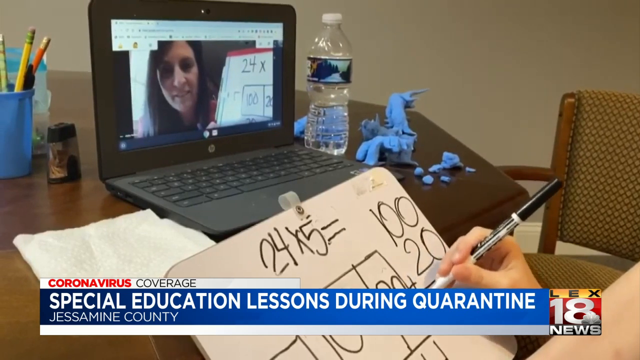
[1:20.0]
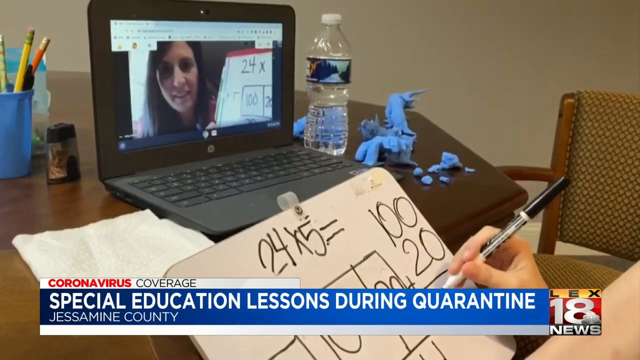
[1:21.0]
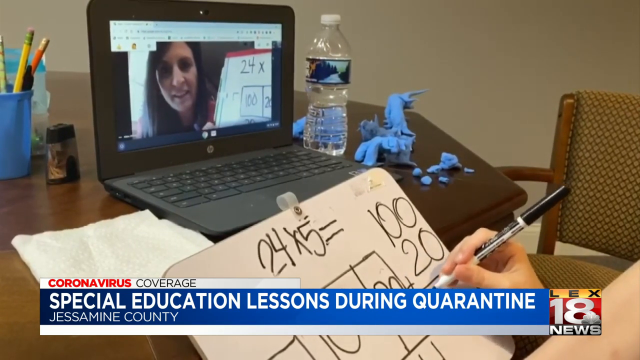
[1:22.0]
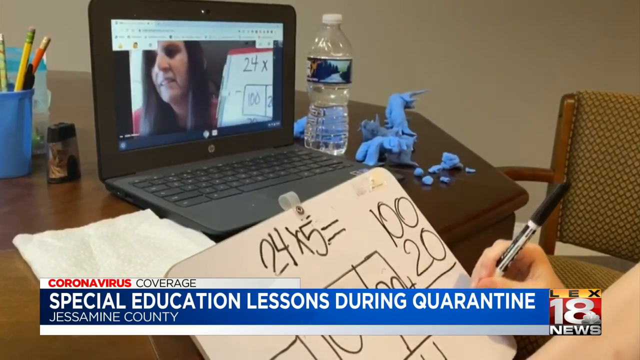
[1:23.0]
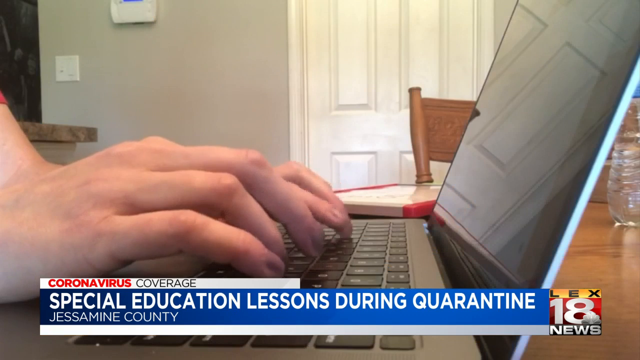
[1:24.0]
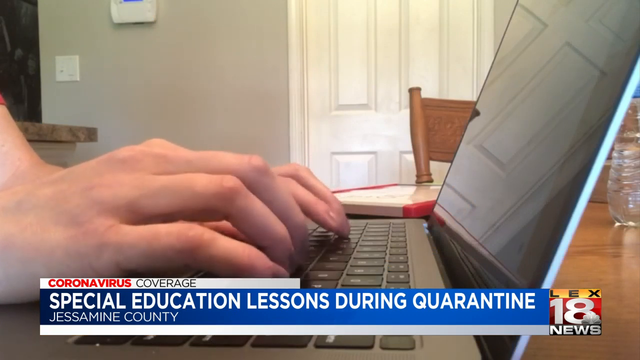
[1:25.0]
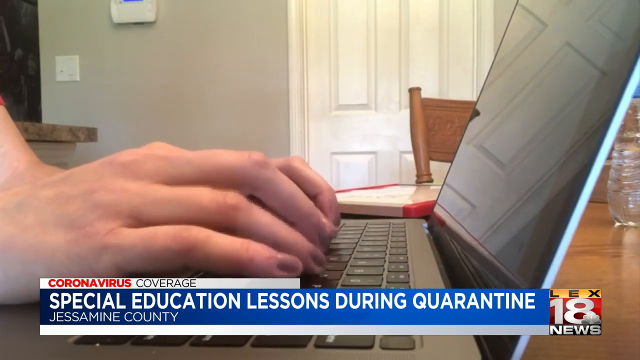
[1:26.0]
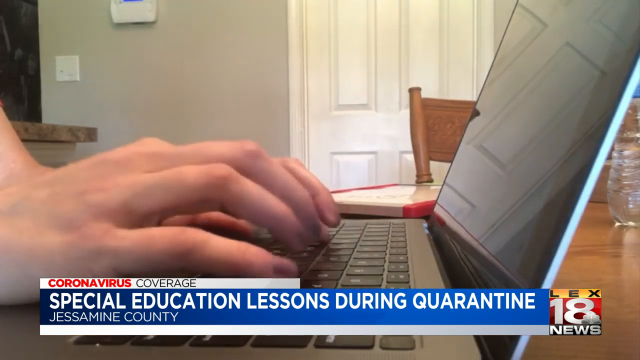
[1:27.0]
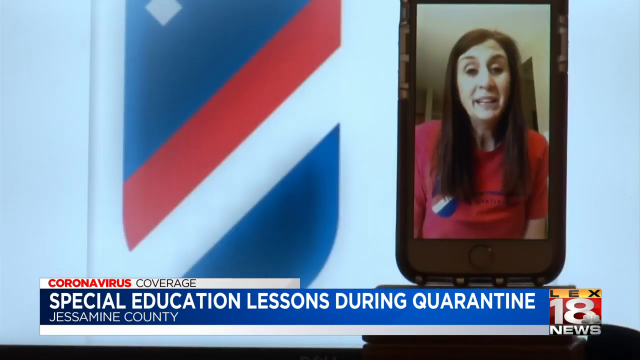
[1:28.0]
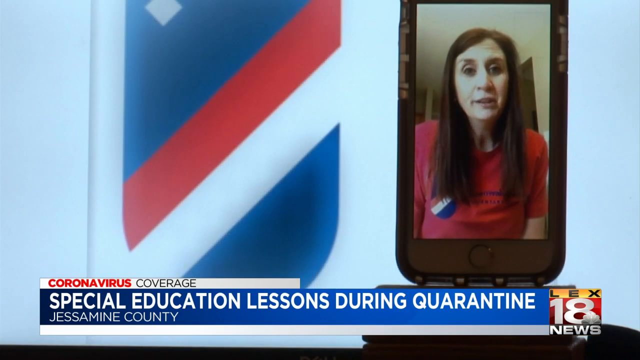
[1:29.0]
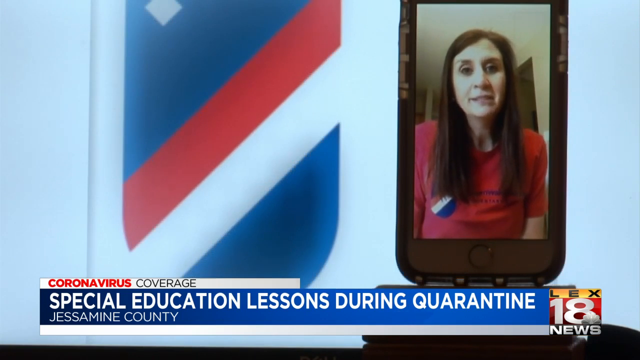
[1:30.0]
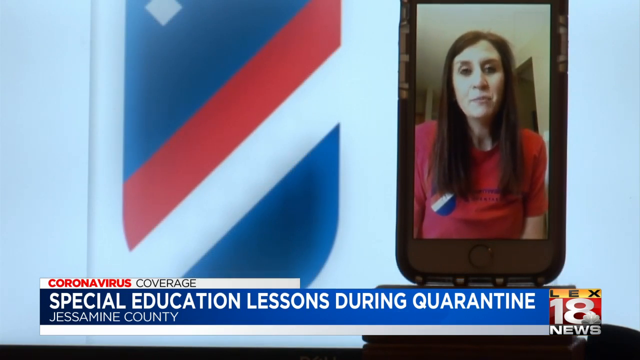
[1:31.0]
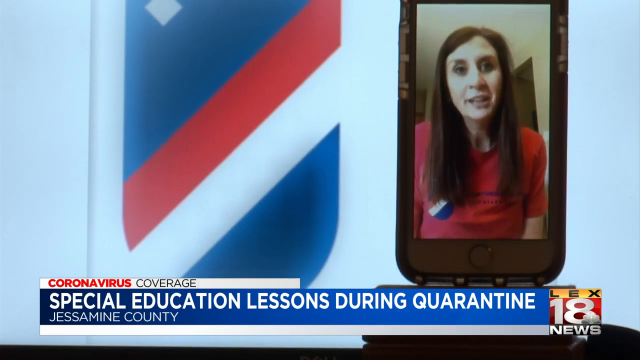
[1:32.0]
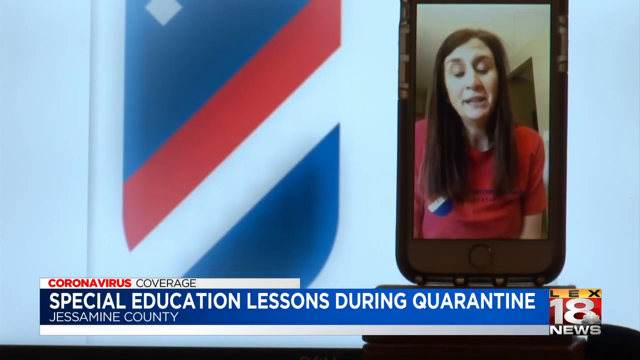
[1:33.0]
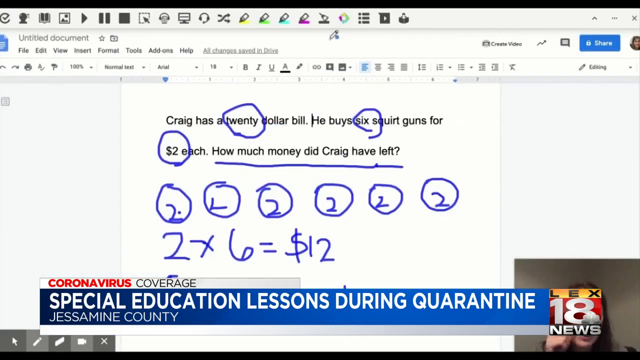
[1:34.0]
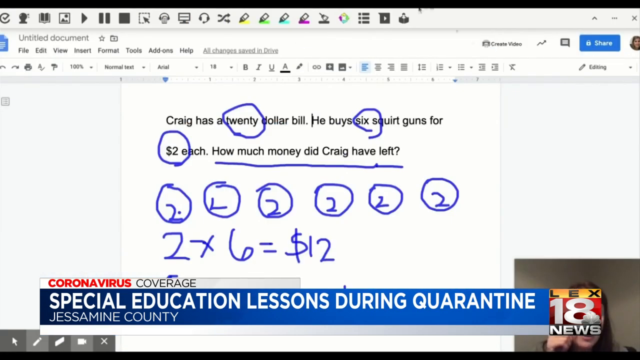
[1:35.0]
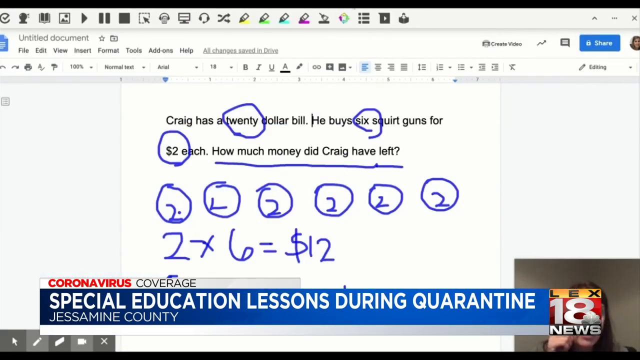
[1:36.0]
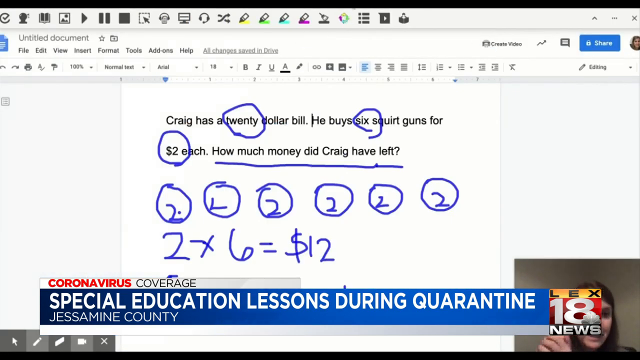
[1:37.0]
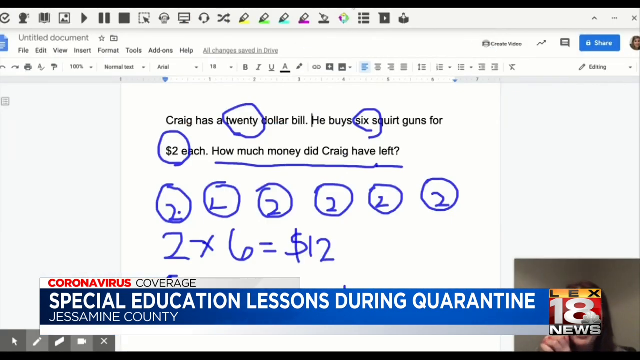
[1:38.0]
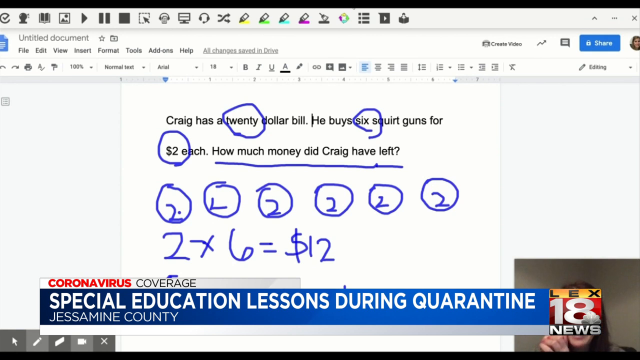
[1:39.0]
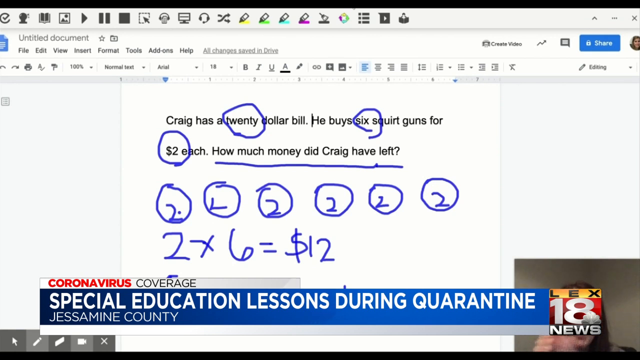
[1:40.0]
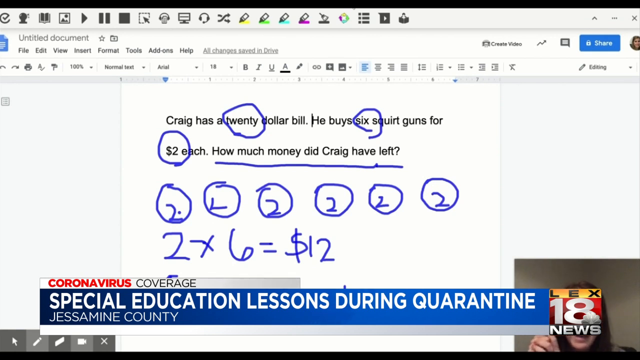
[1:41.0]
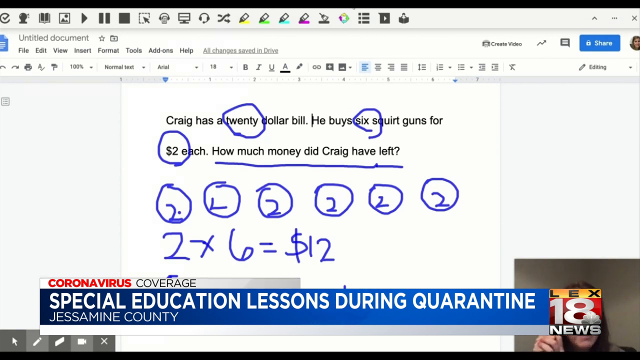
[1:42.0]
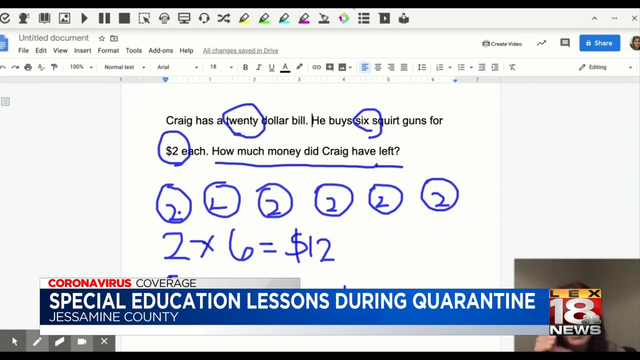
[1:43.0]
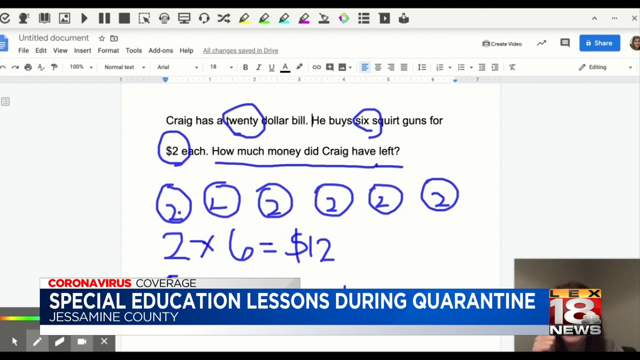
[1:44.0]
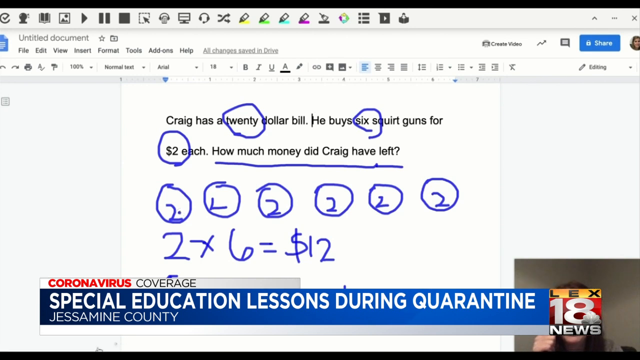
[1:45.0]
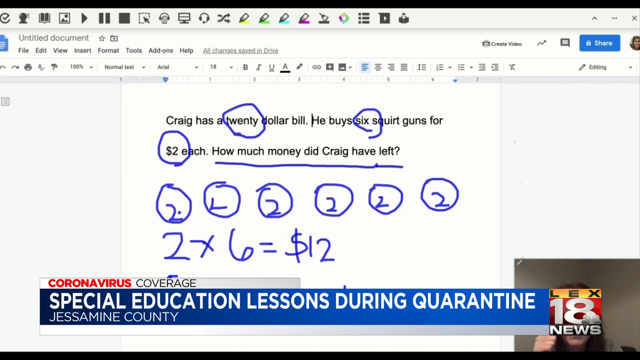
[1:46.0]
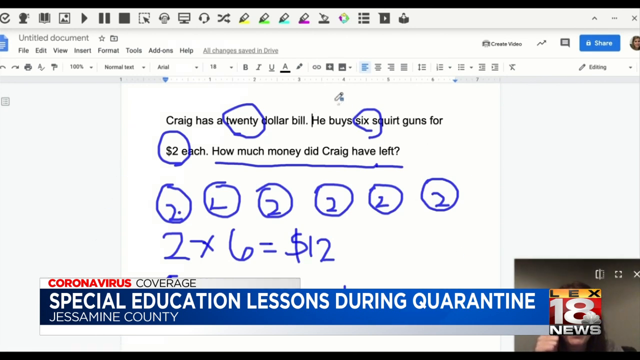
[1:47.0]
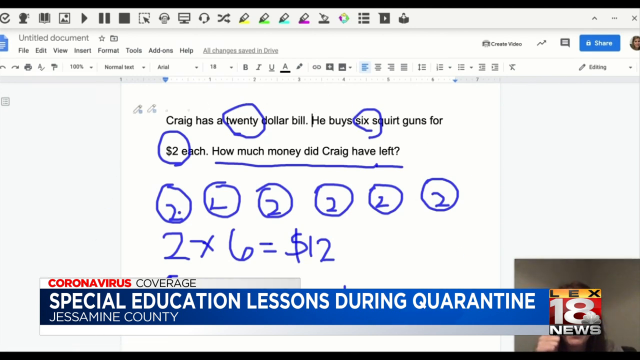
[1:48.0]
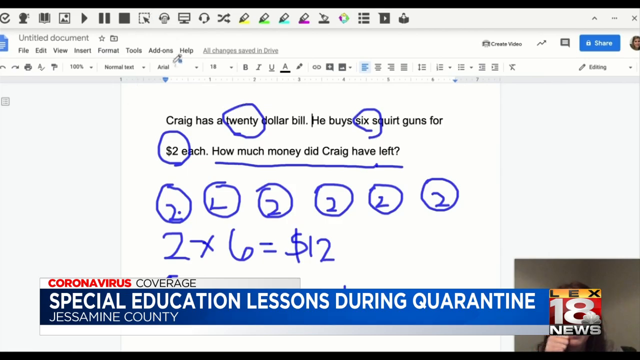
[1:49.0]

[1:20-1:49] A table has water and a laptop on it. A woman holds a scoreboard showing 24 times 5 equals 120. She draws a line, adds a plus sign, and writes an answer. A woman on the laptop screen is also holding some sort of scoreboard. She writes something on the laptop, and then she is seen on the smaller phone screen. An untitled document says "Craig has a $20 bill. He buys six squirt cans for $2 each. How much money did Craig have left?" She has created six circles, each filled with $2, and two times six equals $12. This is a TV segment, with text that says "special education lessons during quarantine in Jessamine County. Corona virus coverage."